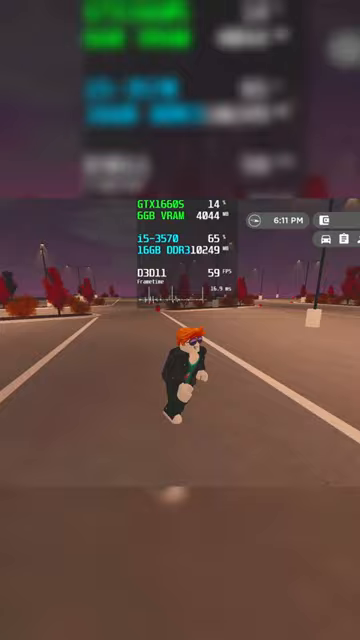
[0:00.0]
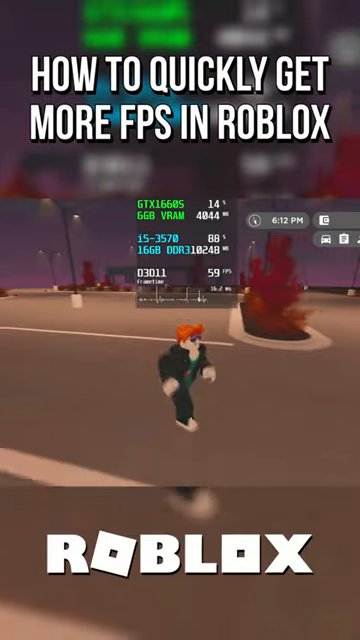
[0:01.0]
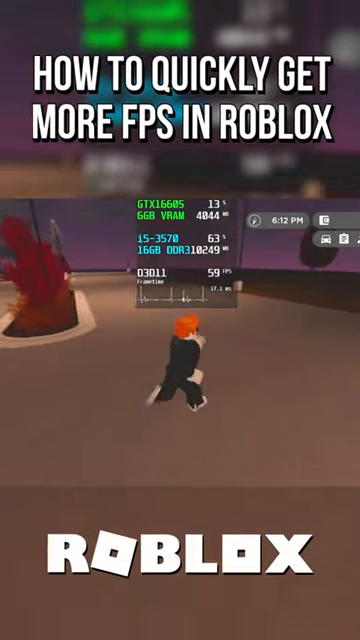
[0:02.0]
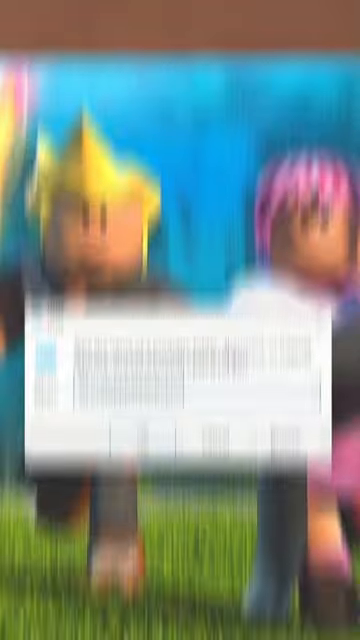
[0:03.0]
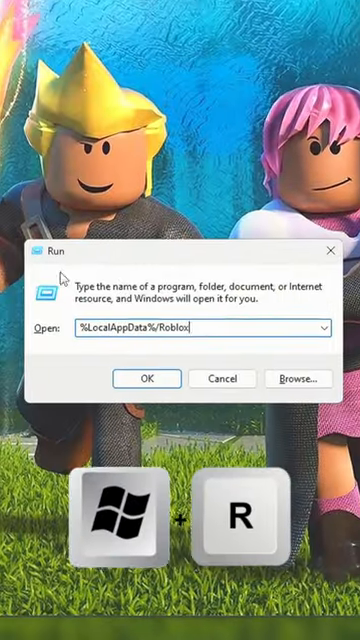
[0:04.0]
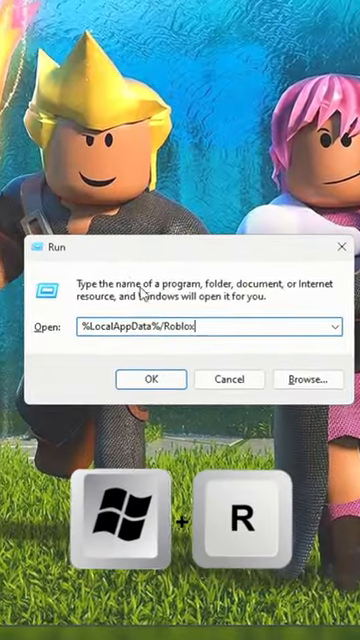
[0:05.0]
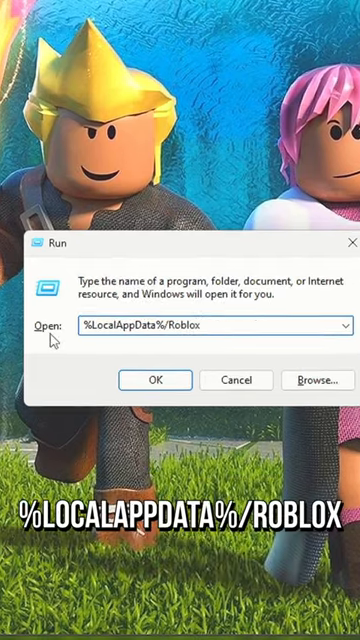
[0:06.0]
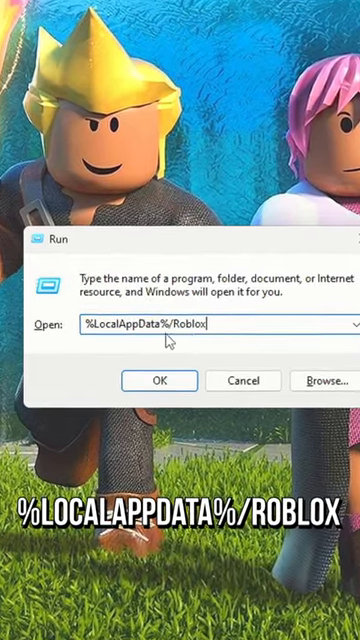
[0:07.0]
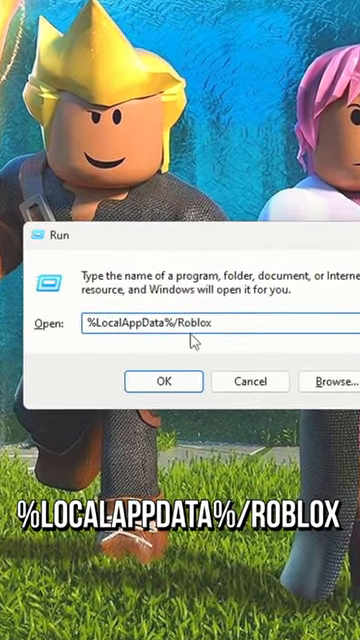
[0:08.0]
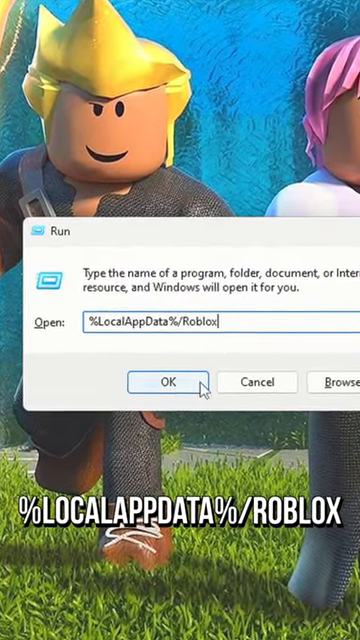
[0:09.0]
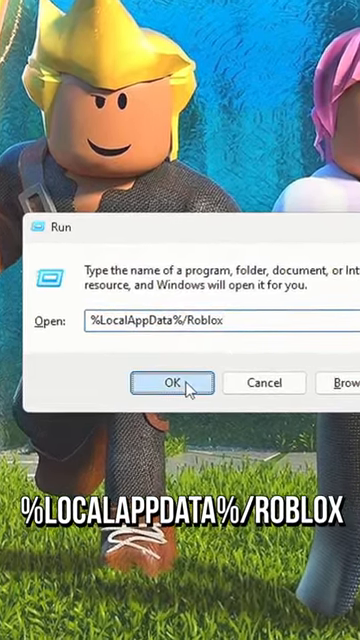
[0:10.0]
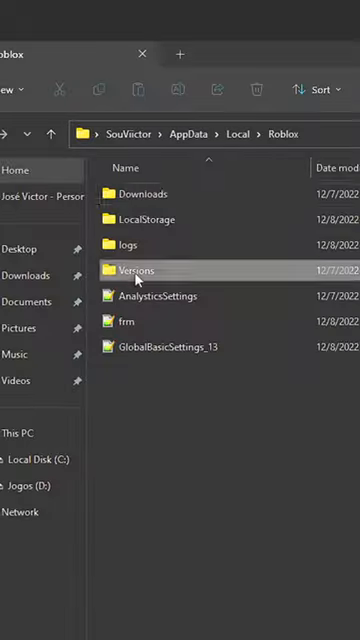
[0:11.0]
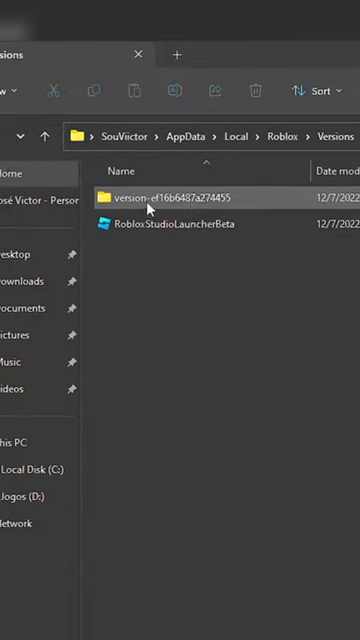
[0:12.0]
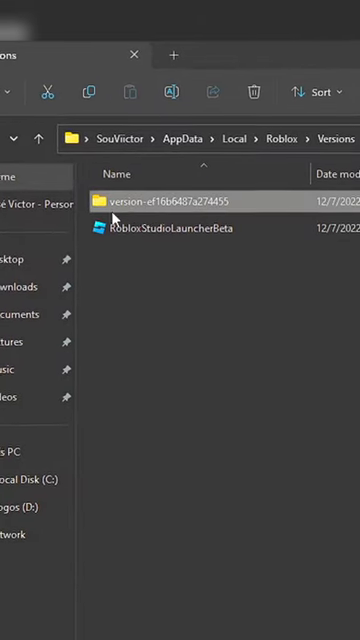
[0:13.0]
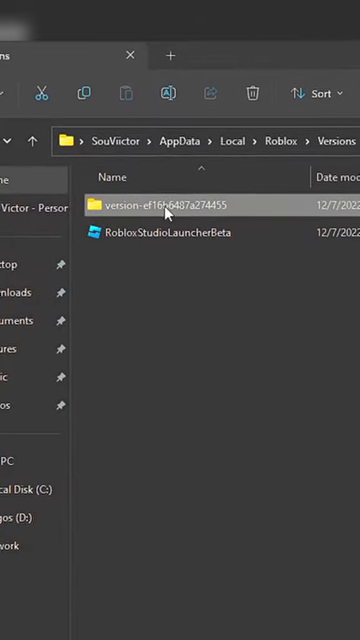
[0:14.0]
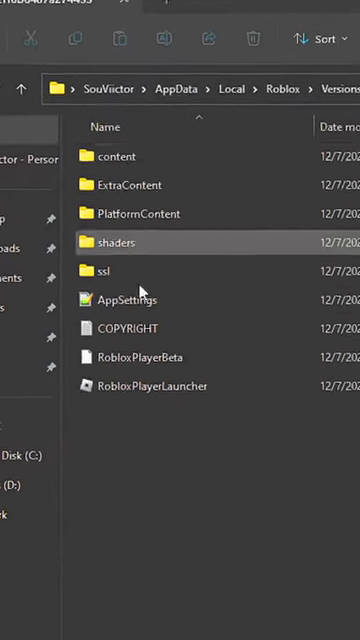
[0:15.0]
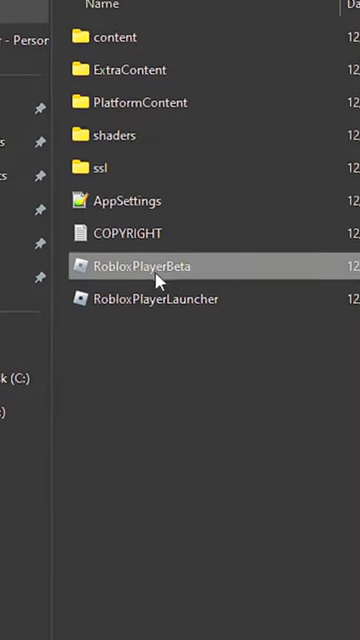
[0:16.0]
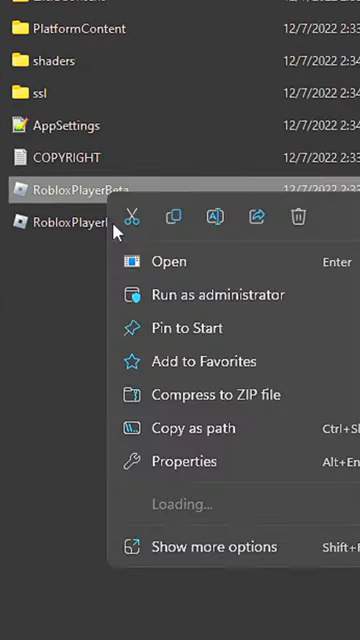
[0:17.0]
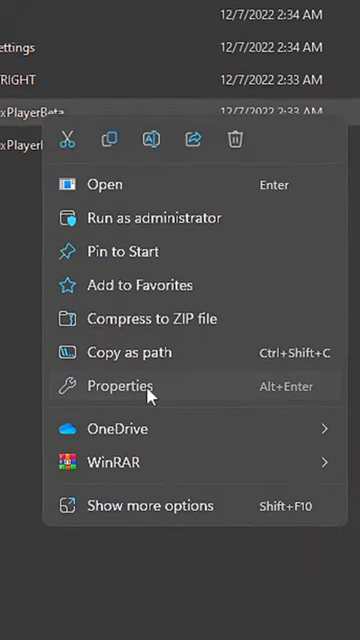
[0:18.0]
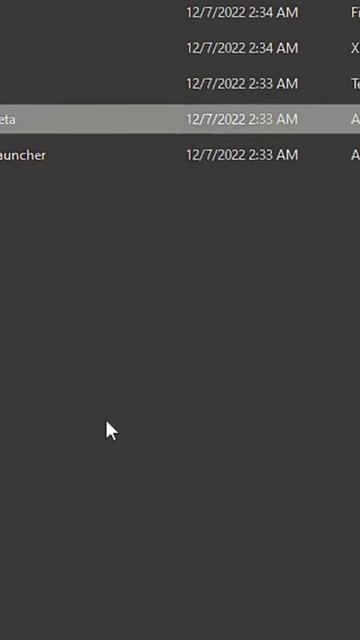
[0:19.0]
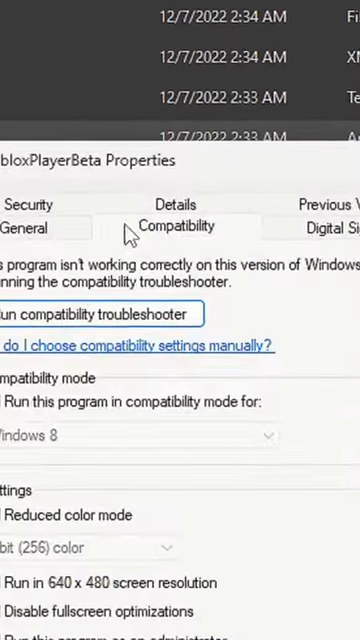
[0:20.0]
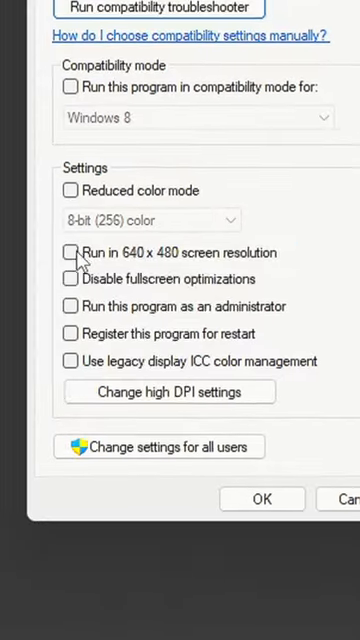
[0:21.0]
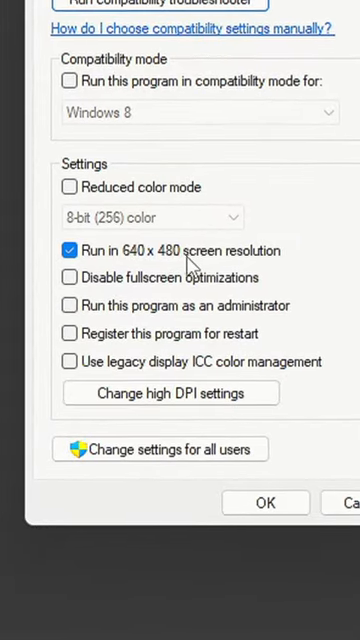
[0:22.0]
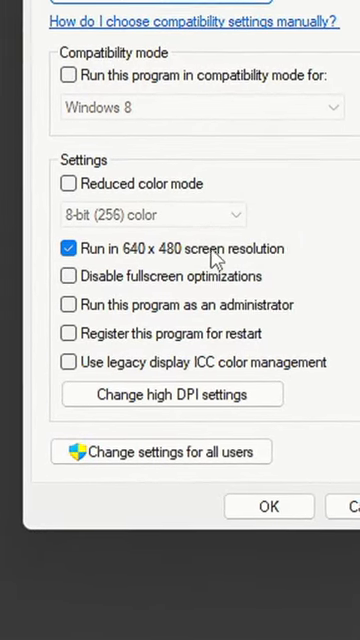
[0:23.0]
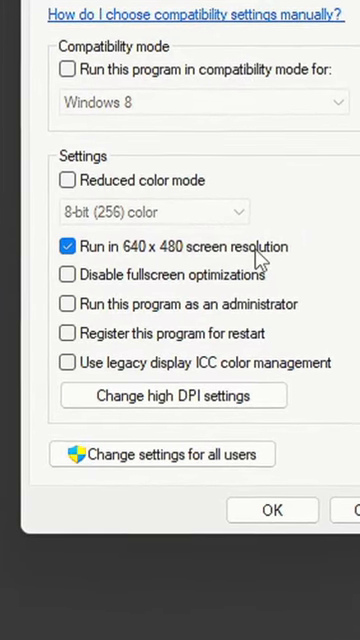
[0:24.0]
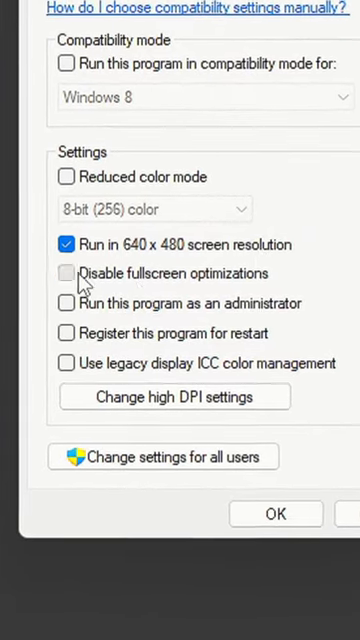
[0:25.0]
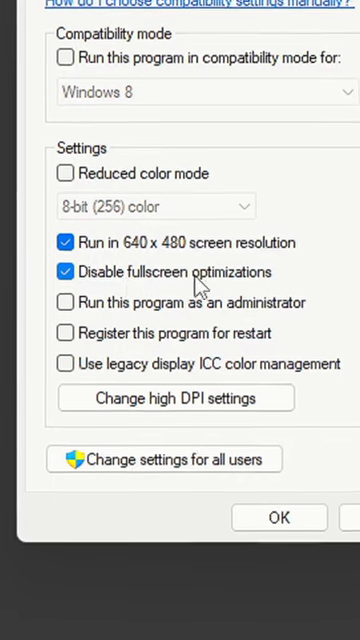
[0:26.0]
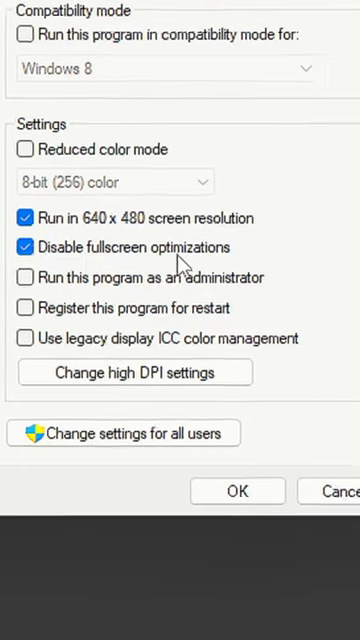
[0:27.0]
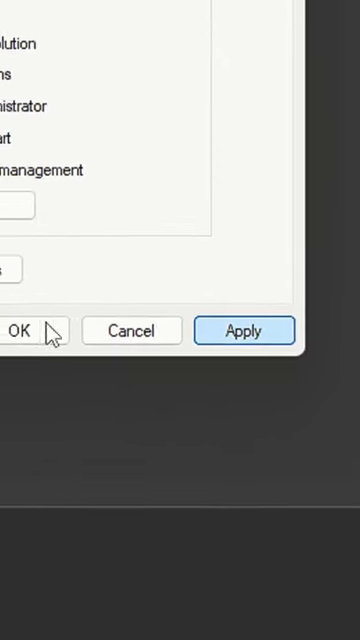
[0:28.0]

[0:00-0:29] The video appears to be a tutorial on how to get more FPS in Roblox. It opens with someone playing Roblox: their character, who has blonde hair and a black outfit, runs down a road. It then goes to a graphic of two Roblox characters with a white menu open in front of it, and something too small to see is clicked on that menu. A bunch of menus within Roblox are then opened, probably from some kind of mod, and the person clicks around. Most of the video is clicking folders and checkboxes in the Roblox settings; the clicking moves too quickly to tell exactly what is selected, but checkboxes are ticked and things are applied. After that, they go very fast.